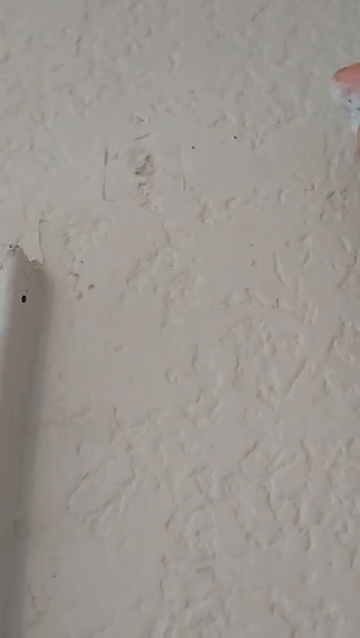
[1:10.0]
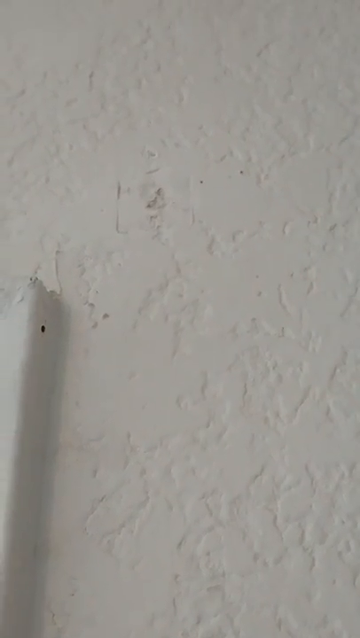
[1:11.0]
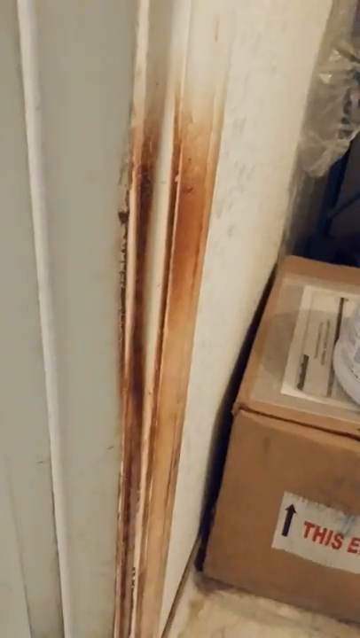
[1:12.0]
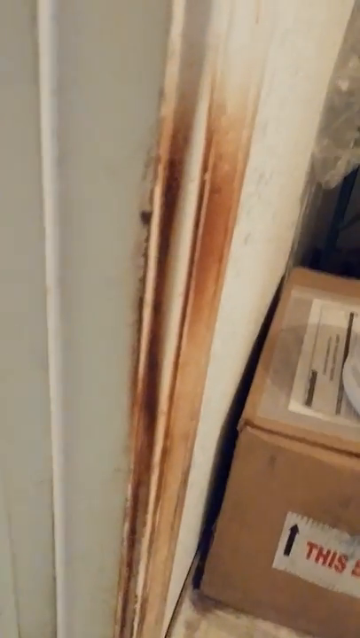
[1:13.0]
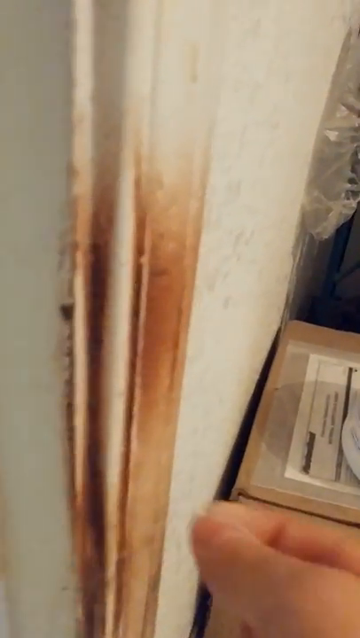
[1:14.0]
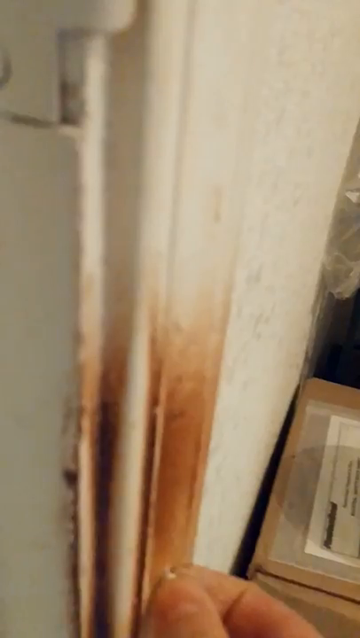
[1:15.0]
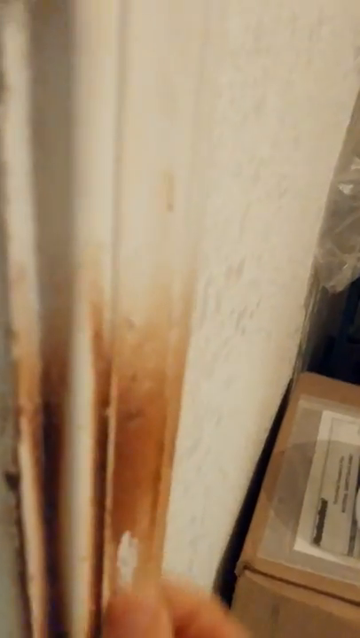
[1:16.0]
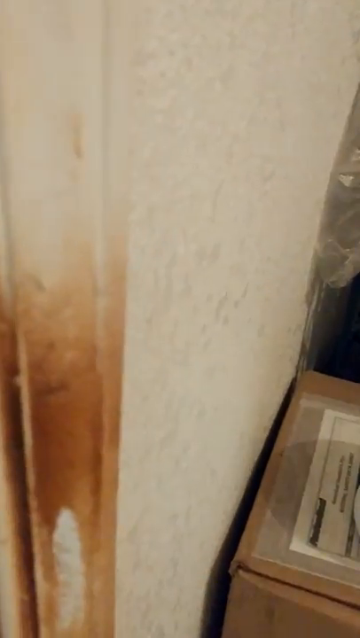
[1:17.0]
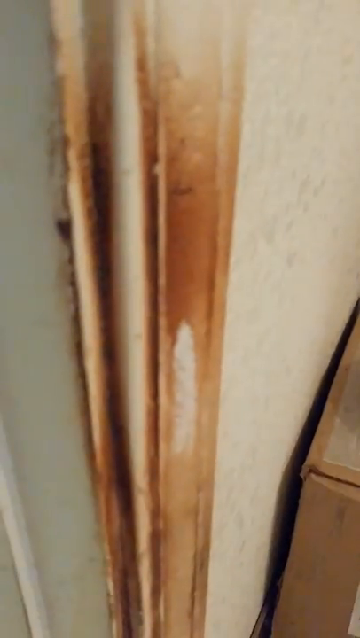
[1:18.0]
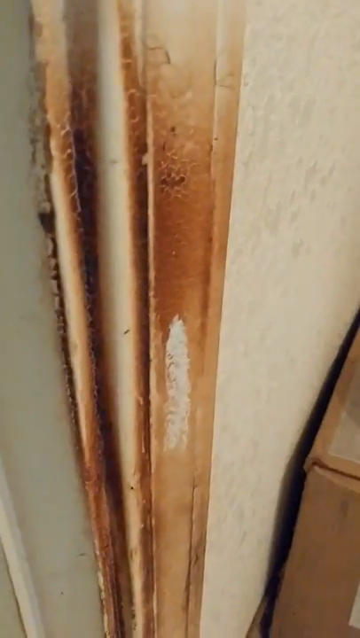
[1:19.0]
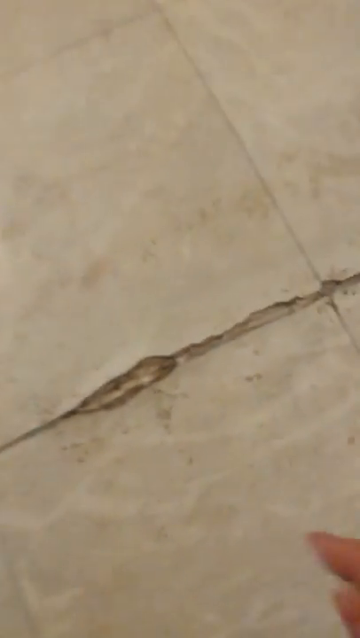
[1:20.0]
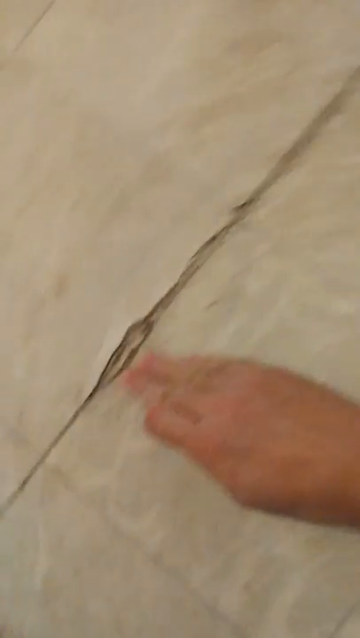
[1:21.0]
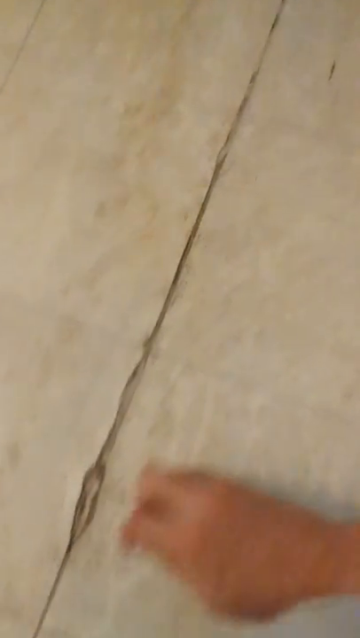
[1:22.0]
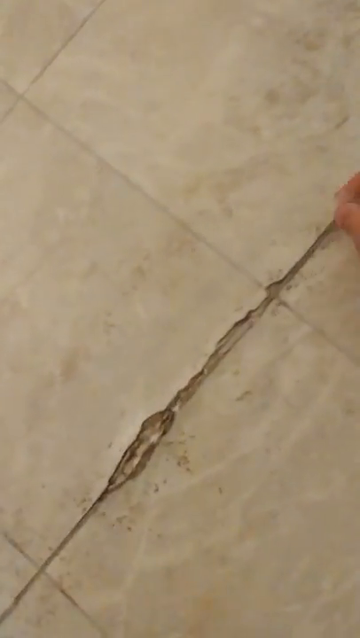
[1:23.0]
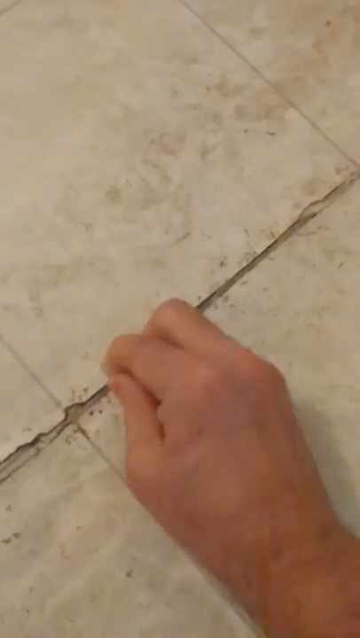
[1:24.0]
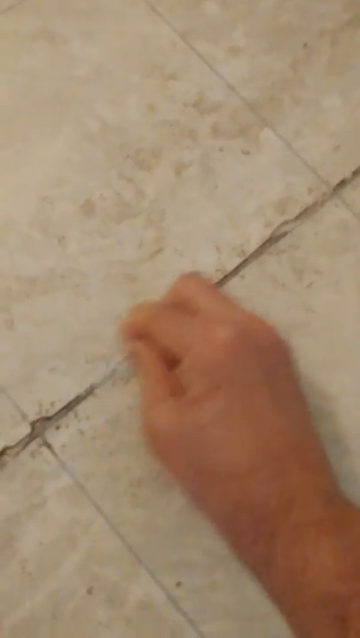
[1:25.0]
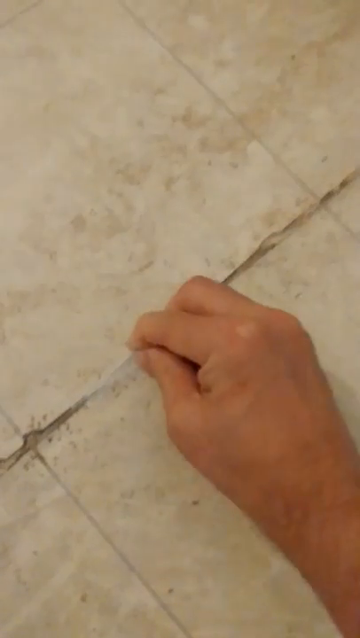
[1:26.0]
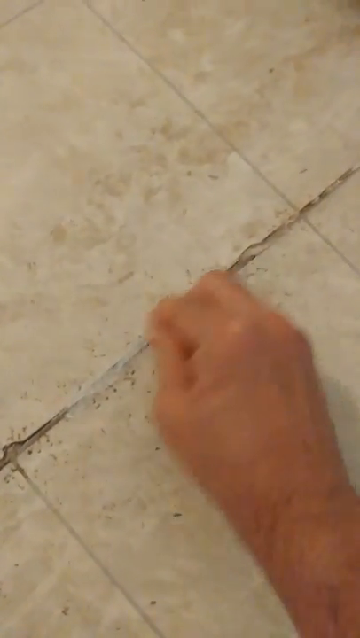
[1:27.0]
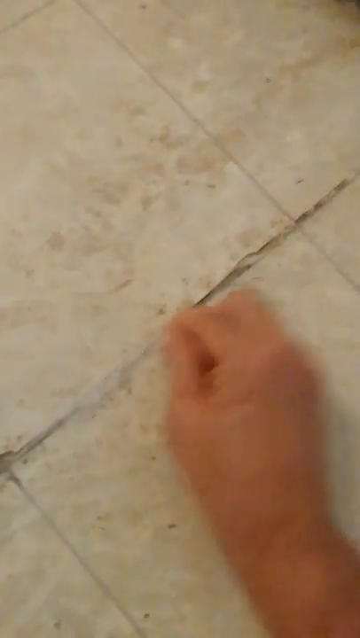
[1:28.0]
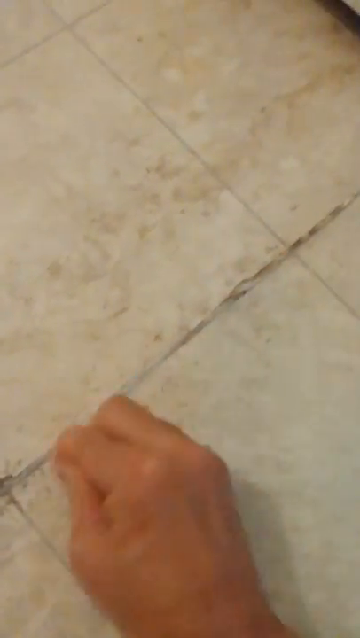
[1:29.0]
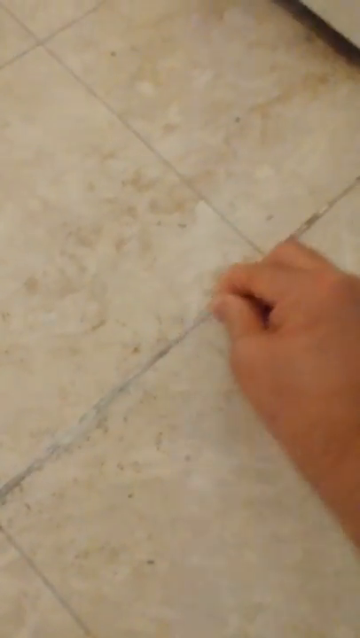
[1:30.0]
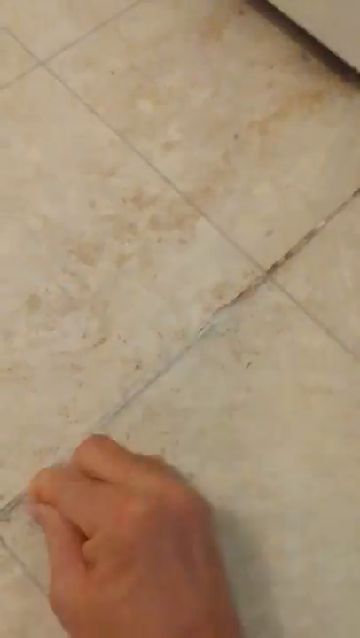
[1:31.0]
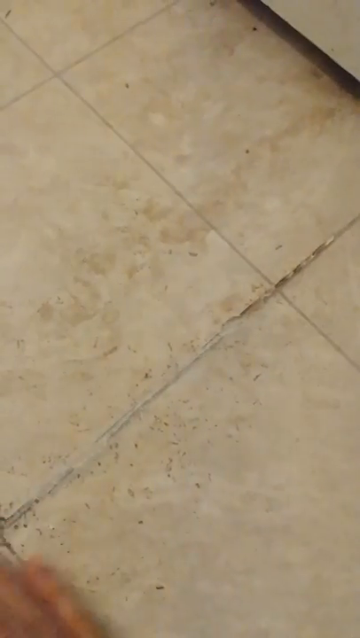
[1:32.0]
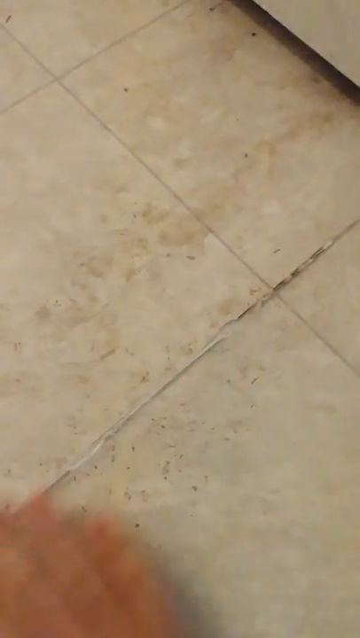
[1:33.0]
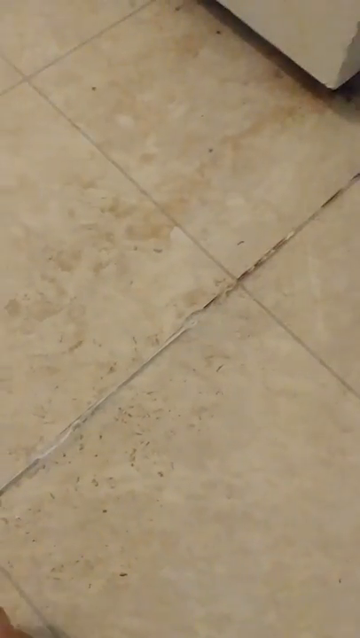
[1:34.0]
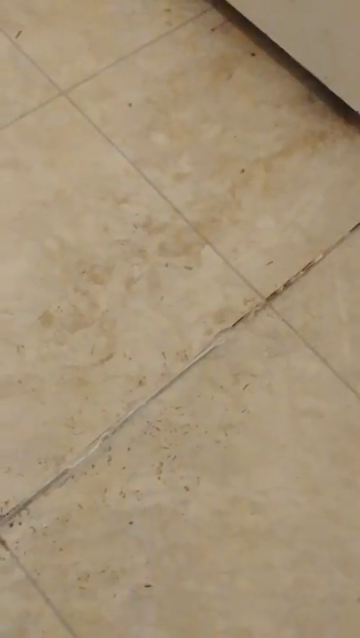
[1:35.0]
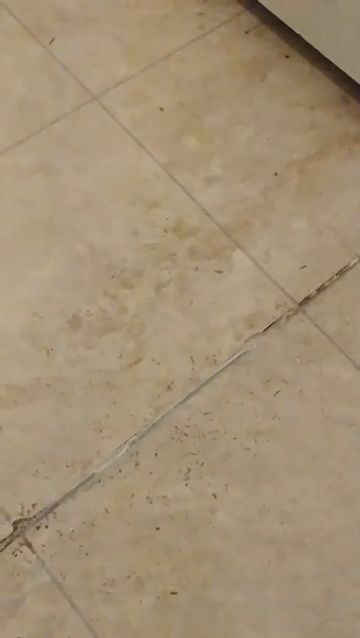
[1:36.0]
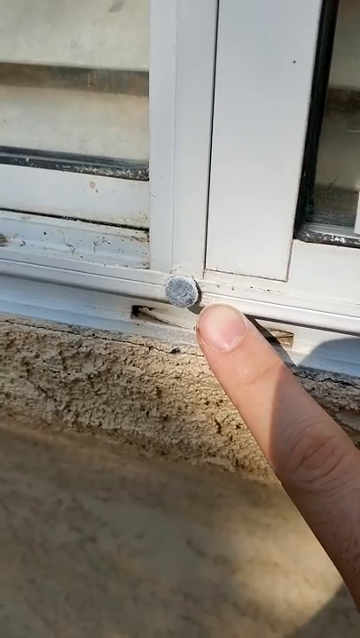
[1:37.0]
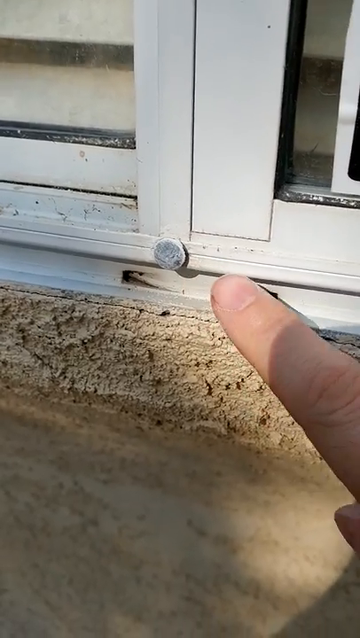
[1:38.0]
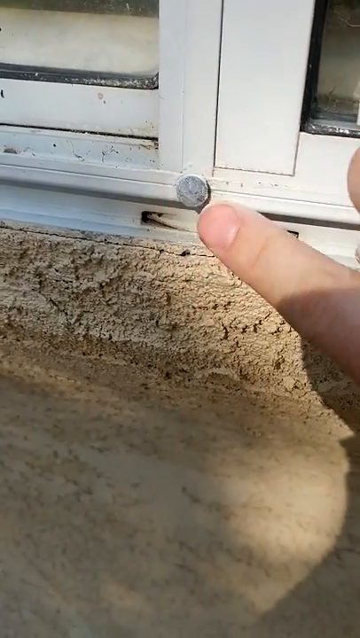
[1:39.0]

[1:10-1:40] A close-up of the wall shows a square indentation with a pretty good sized hole in the middle of it, and the person's fingers are barely visible at the top right, holding a piece of chalk. The view pulls back and leaves the wall, moving to a very dirty door jamb, which they rub with chalk. Next they go to a spot on the kitchen floor that looks very dirty and rub it with chalk. Then they go outside, find a nail put in something, and rub chalk on it.